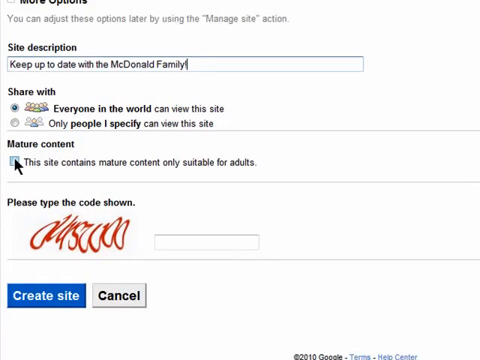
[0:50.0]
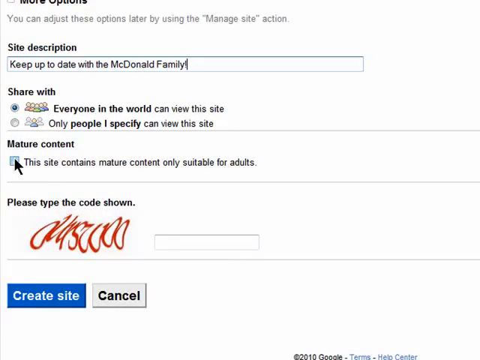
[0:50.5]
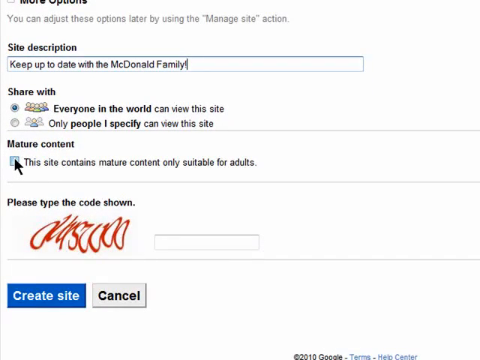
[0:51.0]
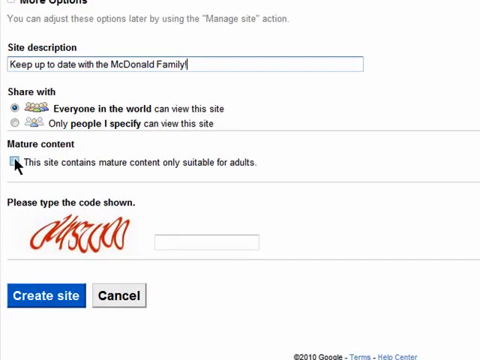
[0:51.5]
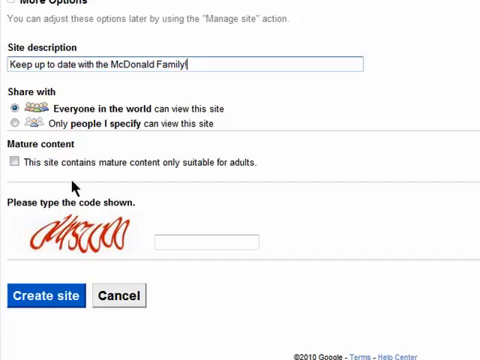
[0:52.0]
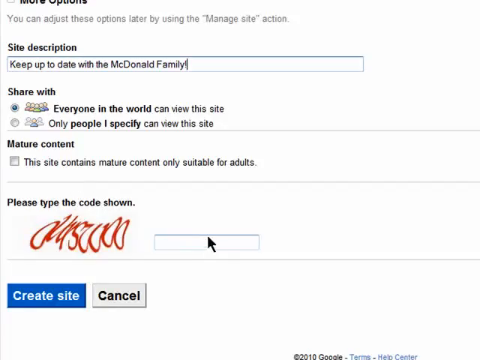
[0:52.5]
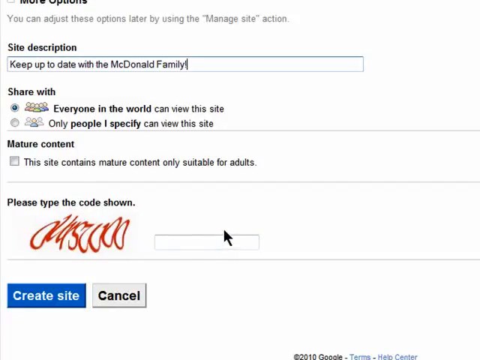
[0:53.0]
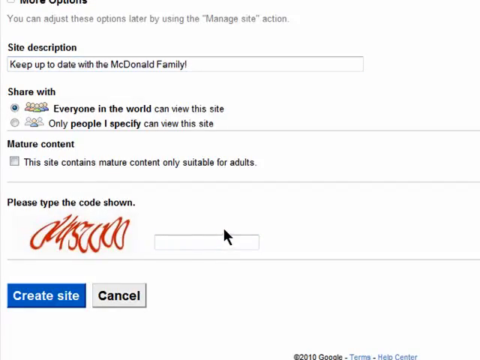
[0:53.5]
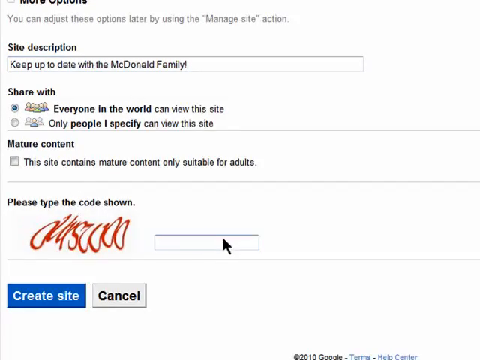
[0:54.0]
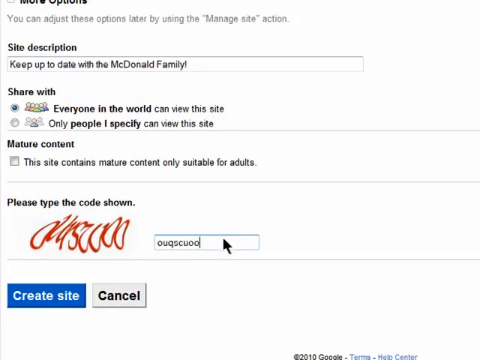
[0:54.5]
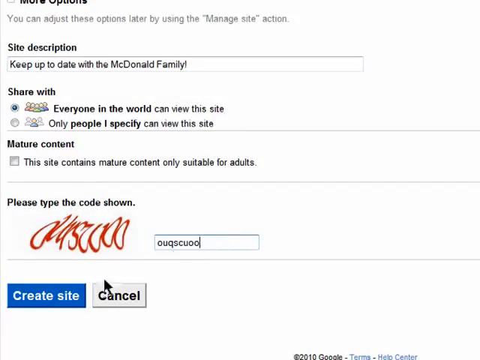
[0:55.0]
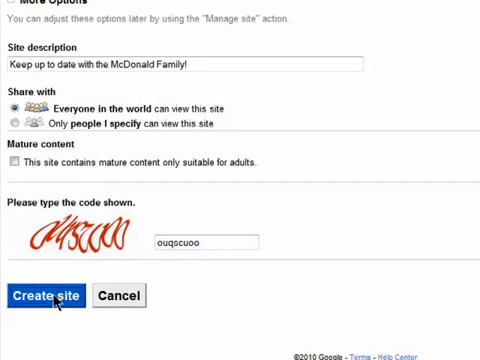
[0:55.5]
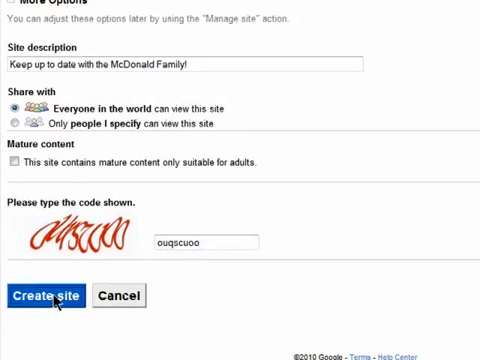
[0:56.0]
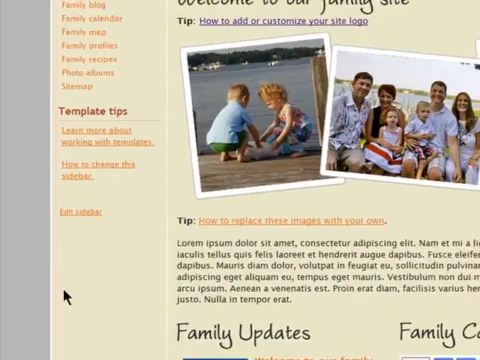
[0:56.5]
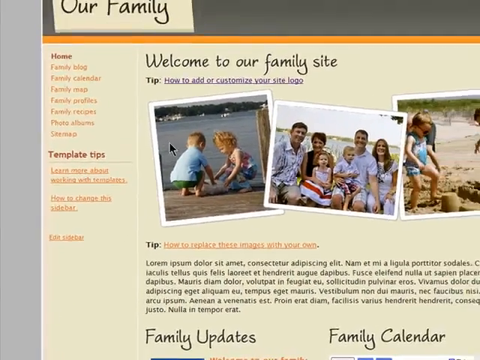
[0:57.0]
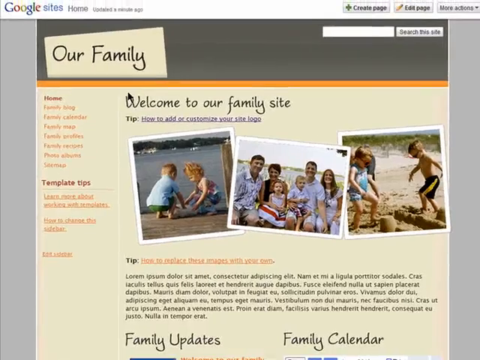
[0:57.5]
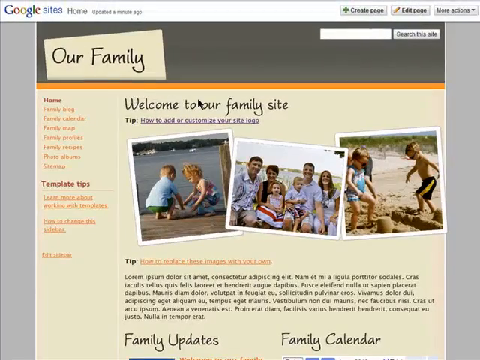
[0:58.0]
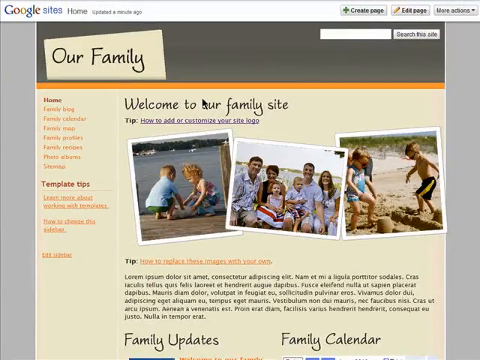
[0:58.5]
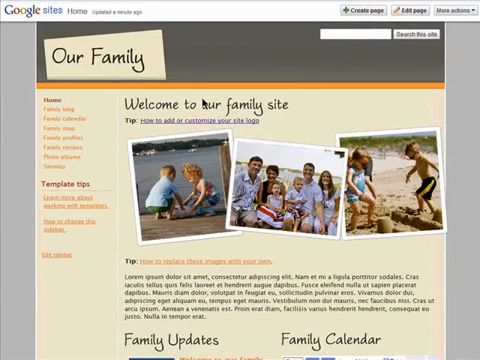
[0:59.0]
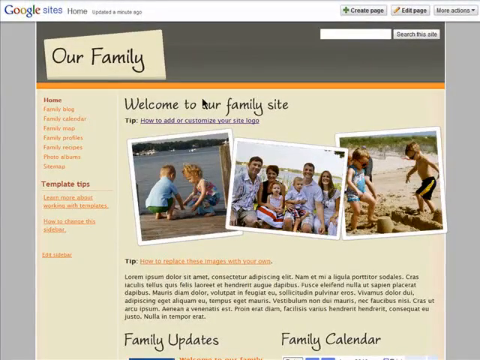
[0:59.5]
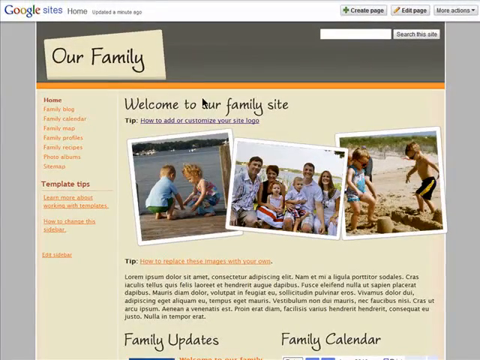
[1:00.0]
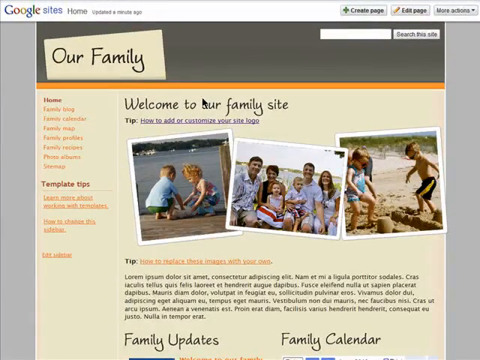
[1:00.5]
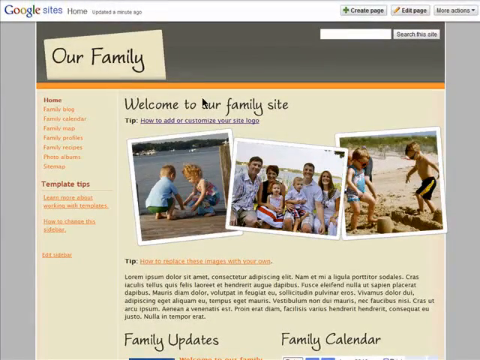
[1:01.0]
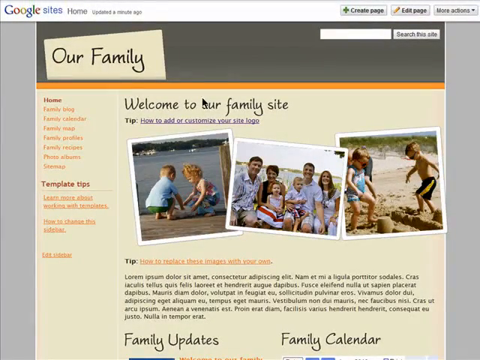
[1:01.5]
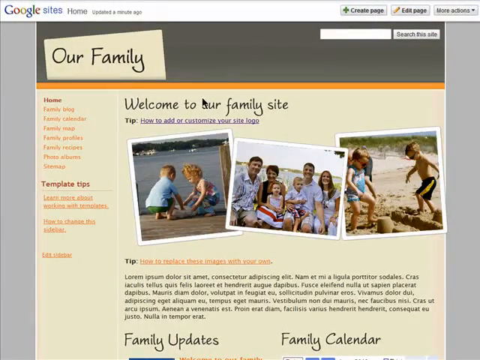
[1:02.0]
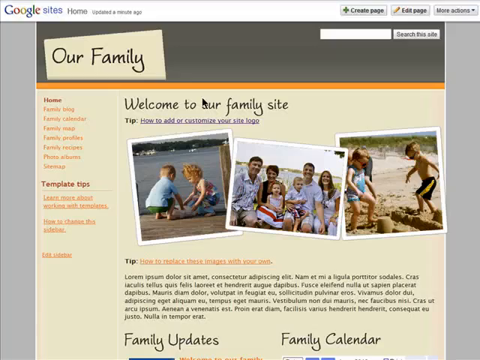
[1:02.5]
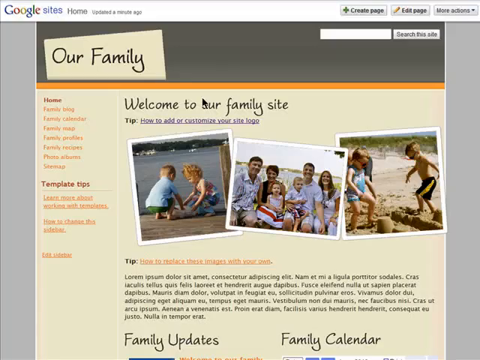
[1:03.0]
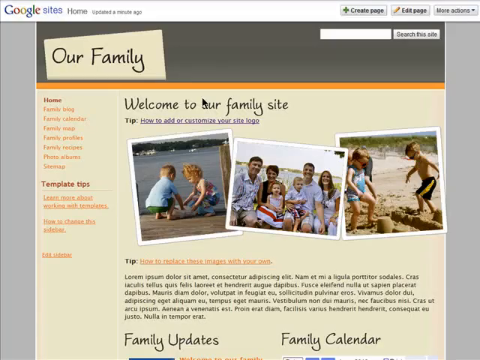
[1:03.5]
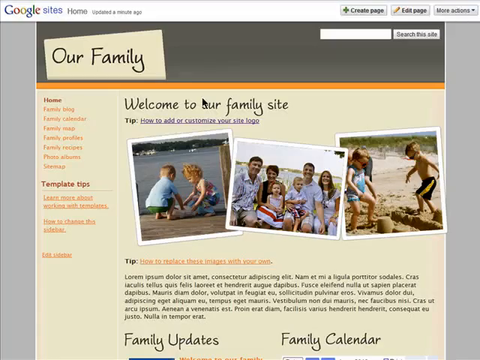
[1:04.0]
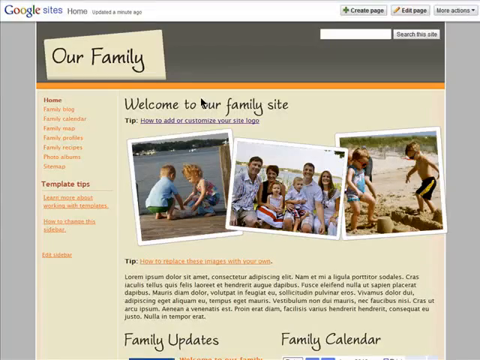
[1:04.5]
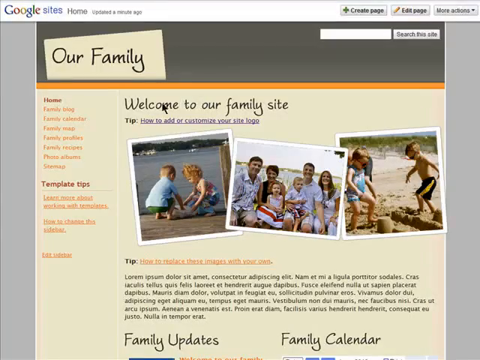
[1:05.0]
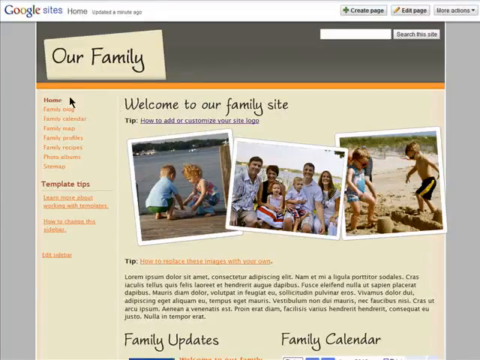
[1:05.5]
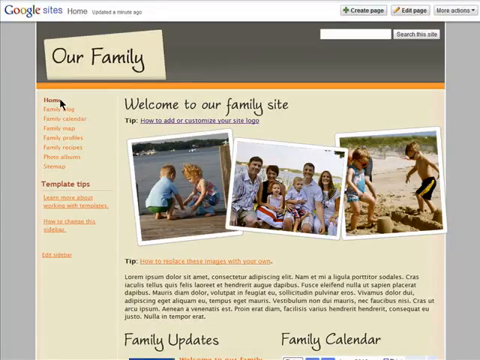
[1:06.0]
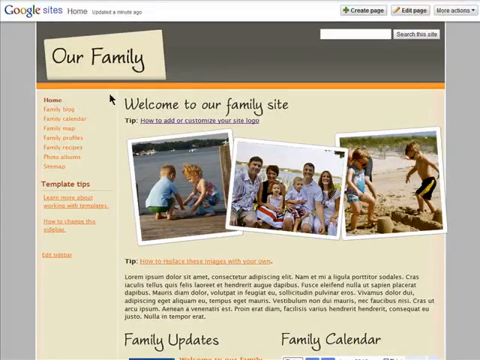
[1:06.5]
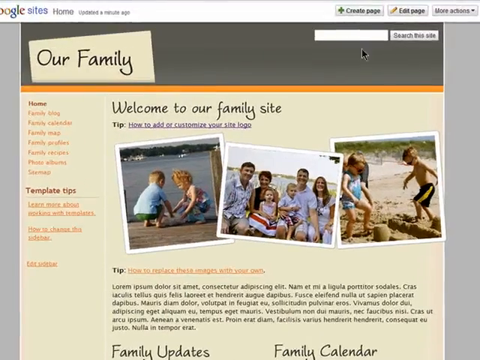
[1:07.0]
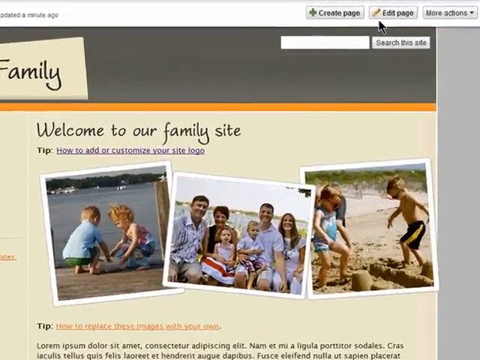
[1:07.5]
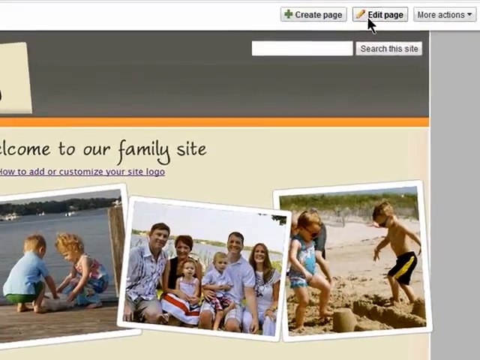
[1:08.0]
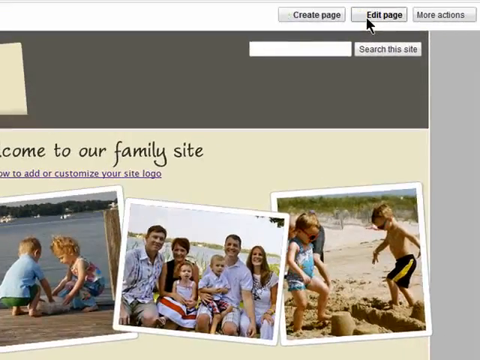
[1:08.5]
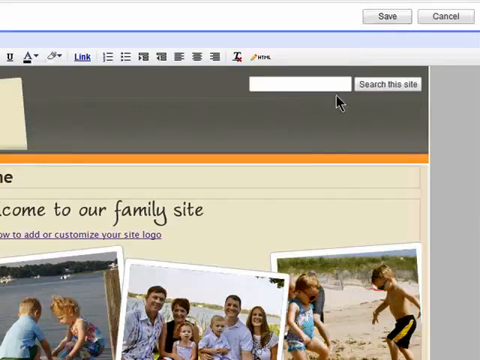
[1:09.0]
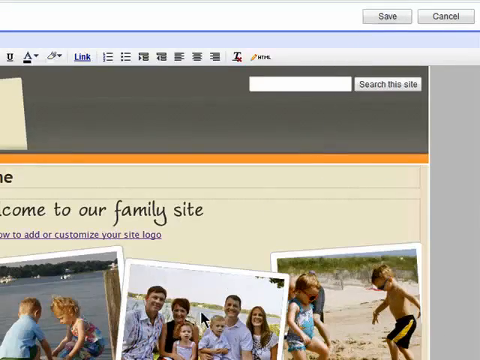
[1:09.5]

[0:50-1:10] Near the bottom of the page, the cursor hovers over what seems to be the mature content section. There is a box, and to its right the text reads "this site contains mature content only suitable for adults." The cursor is there but moves away without clicking it, going instead to "please type the code shown," where a series of hard-to-make-out letters is displayed. The code is entered and the button below is clicked. Another window then appears reading "our family"; it looks like a regular website, apparently created by this family. It reads "welcome to our family," with the top heading "our family." Below, on the left, are some selections, and there are picture clips that look like photos showing a group of individuals, children, and in the middle adults and children. The cursor goes up to the right-hand corner and clicks on a save area, seemingly to save some data.